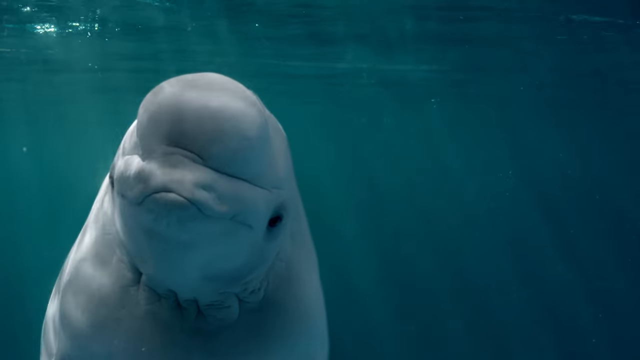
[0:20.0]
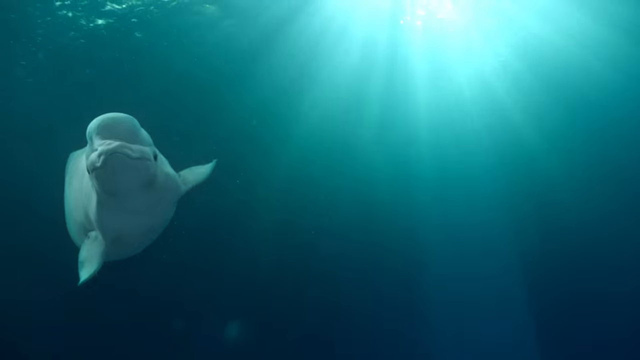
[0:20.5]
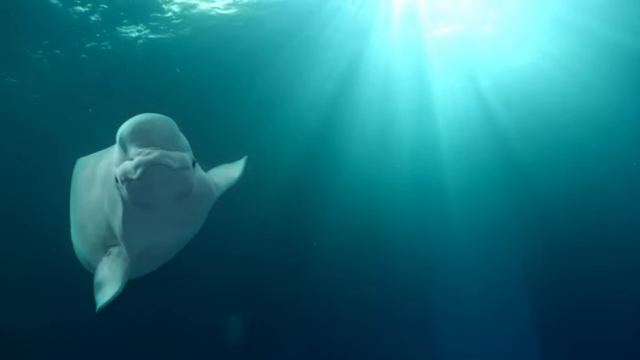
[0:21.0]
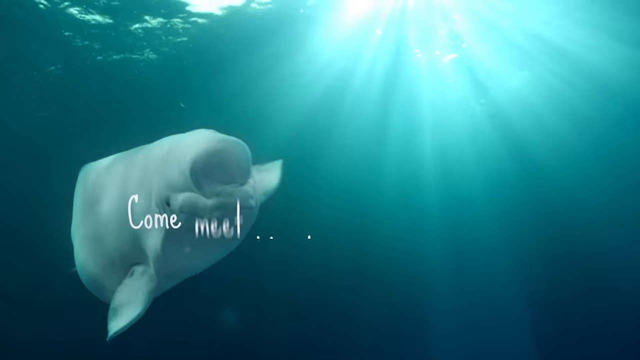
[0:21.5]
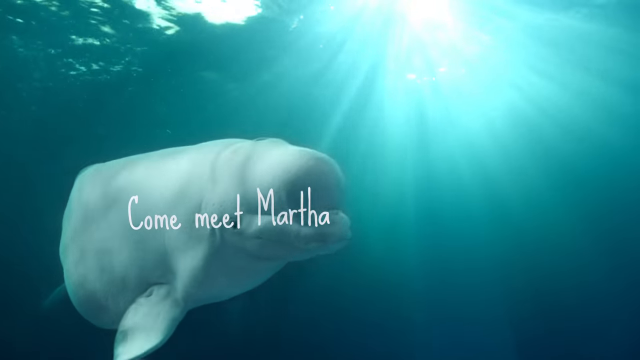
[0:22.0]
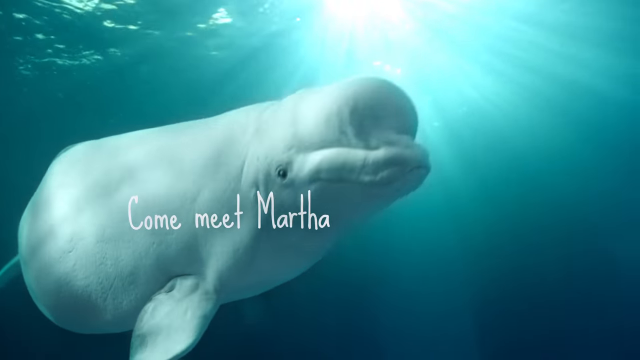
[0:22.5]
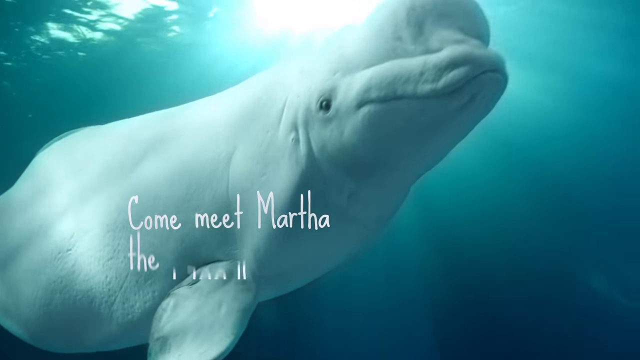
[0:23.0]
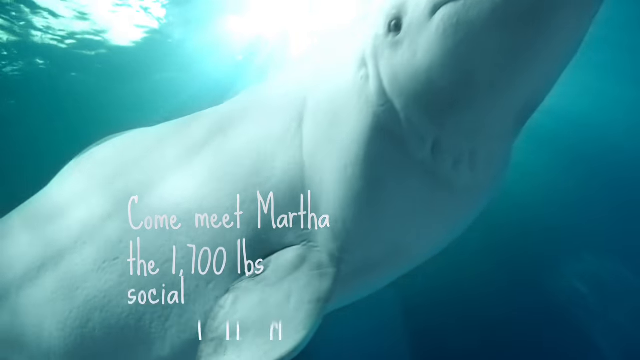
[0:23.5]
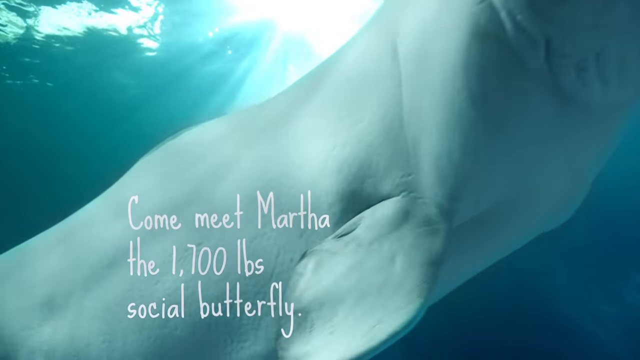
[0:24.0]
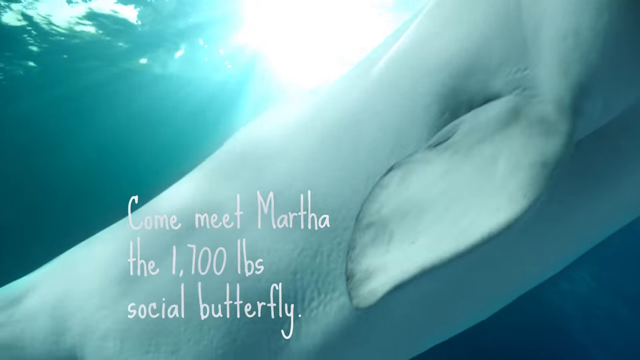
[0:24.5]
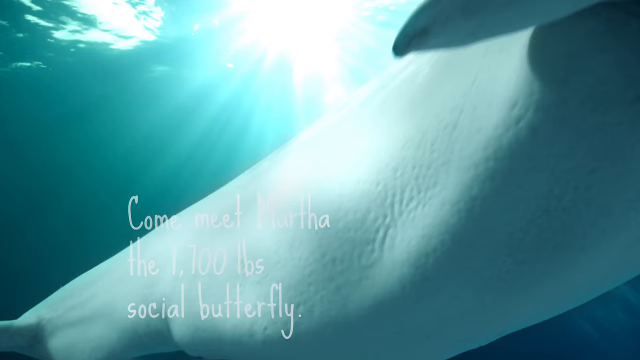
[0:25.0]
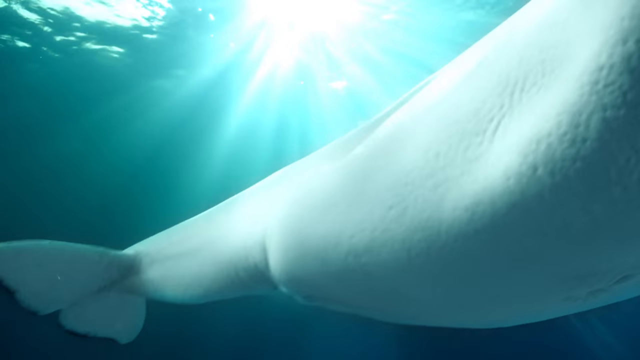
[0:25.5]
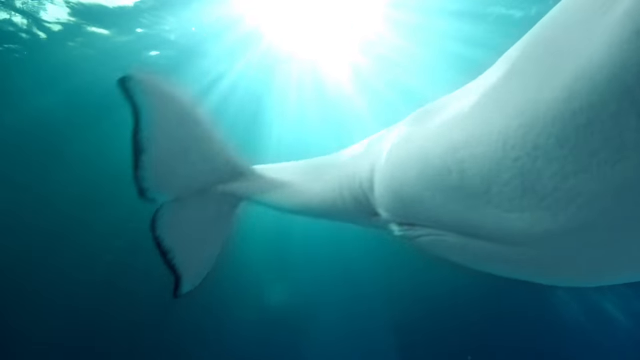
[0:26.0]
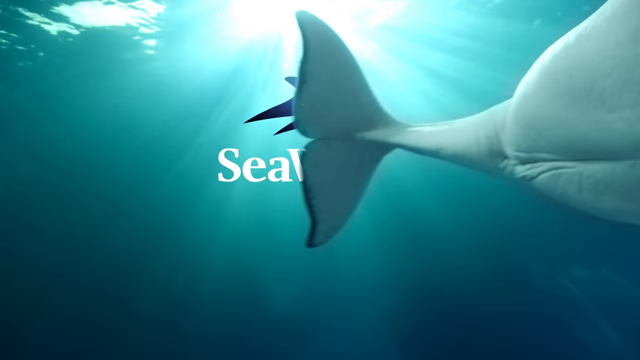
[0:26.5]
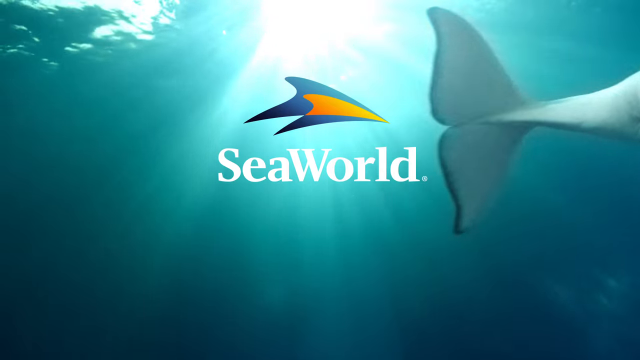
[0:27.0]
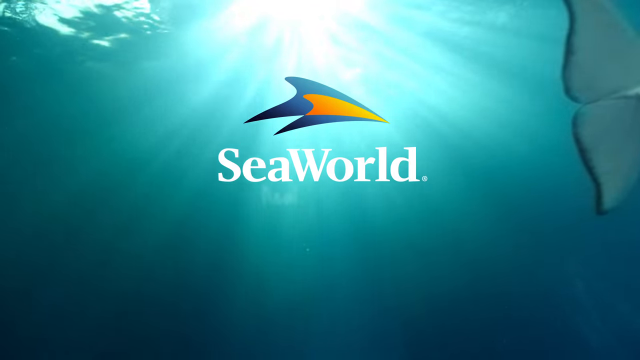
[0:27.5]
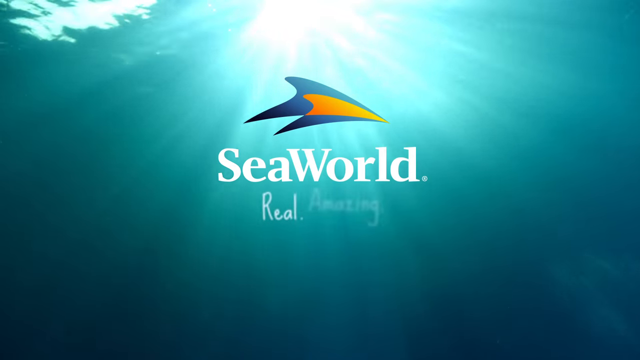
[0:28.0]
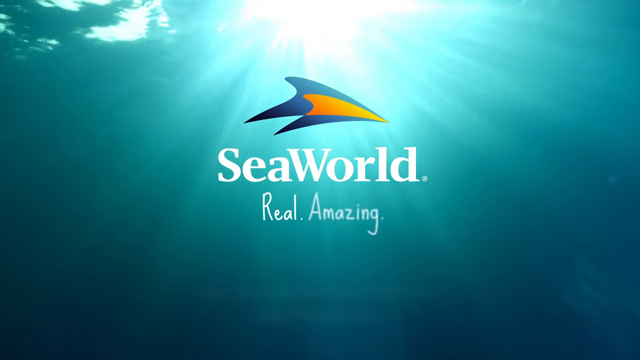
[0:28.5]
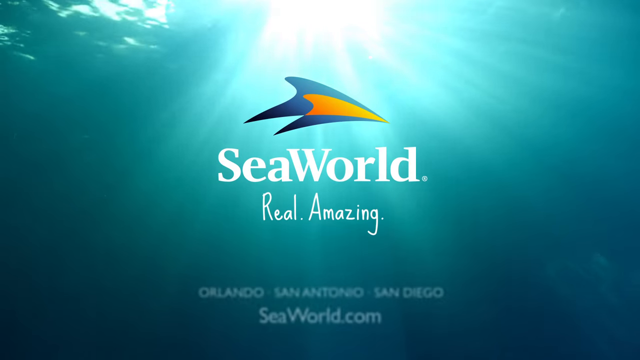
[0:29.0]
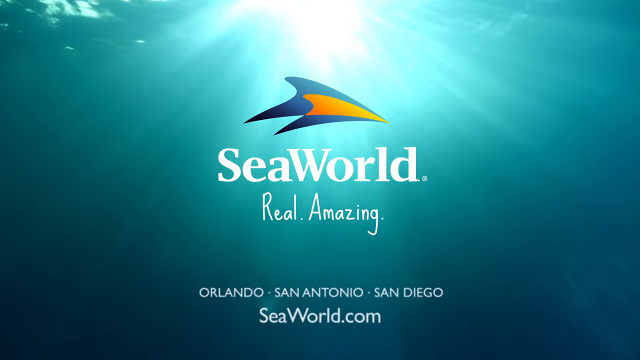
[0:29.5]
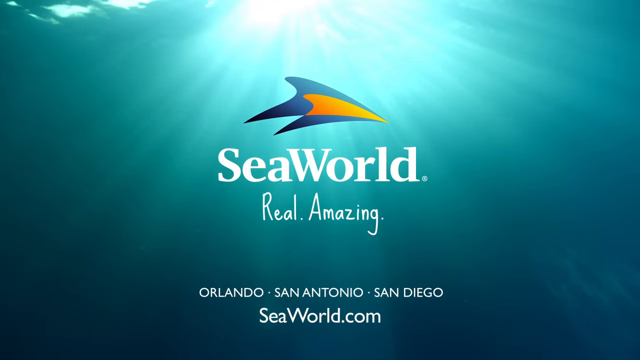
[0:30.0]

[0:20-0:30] A large beluga whale is stationary and floating on the left-hand side of the screen. The video cuts to the beluga whale swimming, again on the left-hand side, coasting through the water. In the top right-hand side, sunlight shines beams down through the water, which is fairly clear and blue and light teal in colour. Text on screen reads "come meet Martha". As the beluga whale moves to the right-hand side of the screen, more text appears: "the £1,700 social butterfly". The creature rotates onto its side, and a flipper moves off the right-hand side of the screen. Next comes a logo: a blue shape with an orange-yellow centre, three points on the left-hand side and a single sharp point on the right-hand side. White text reads "Sea World", with "real and amazing" underneath, then "Orlando, San Antonio, San Diego", and below that the website address "seaworld.com".